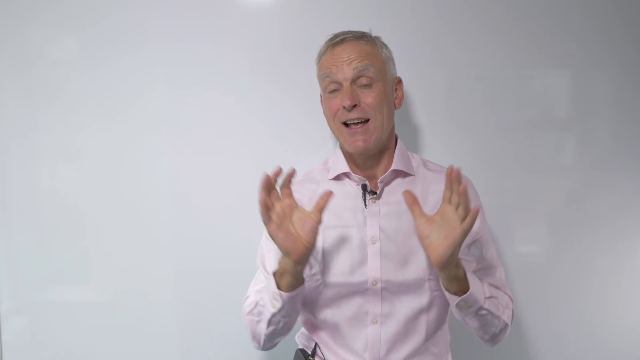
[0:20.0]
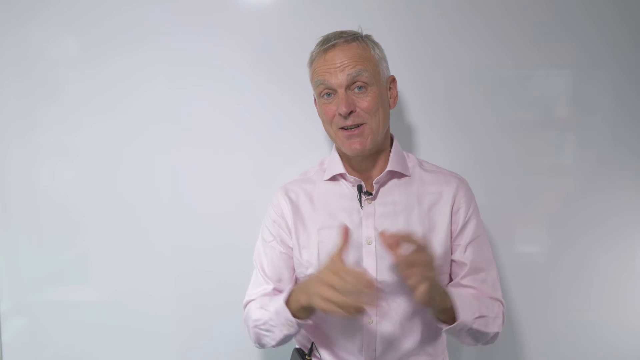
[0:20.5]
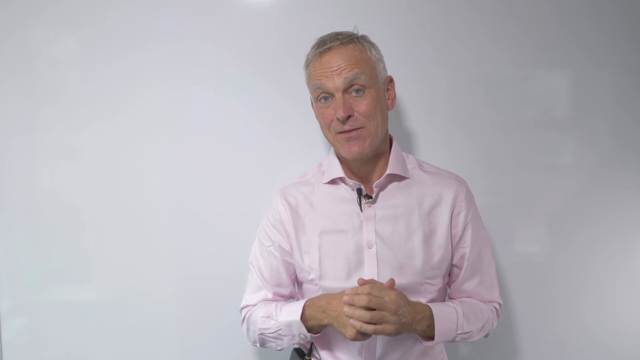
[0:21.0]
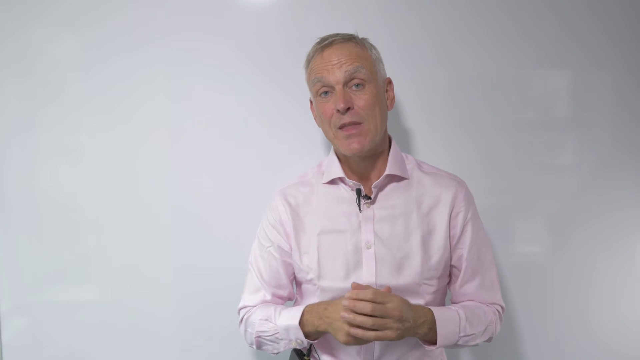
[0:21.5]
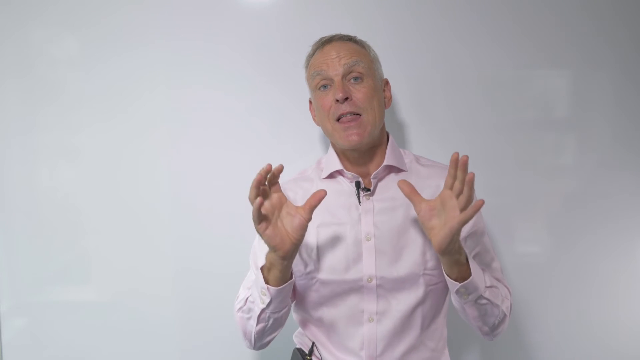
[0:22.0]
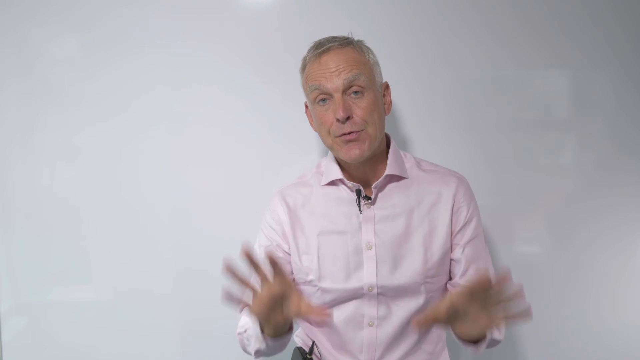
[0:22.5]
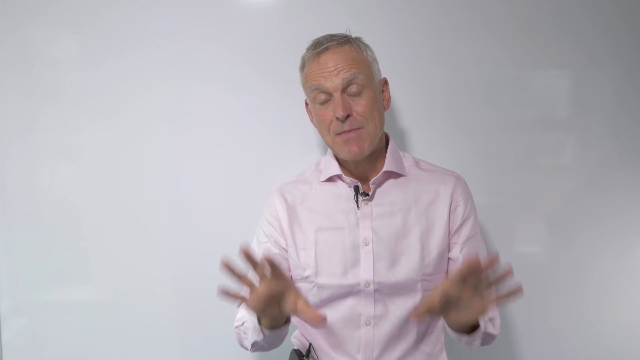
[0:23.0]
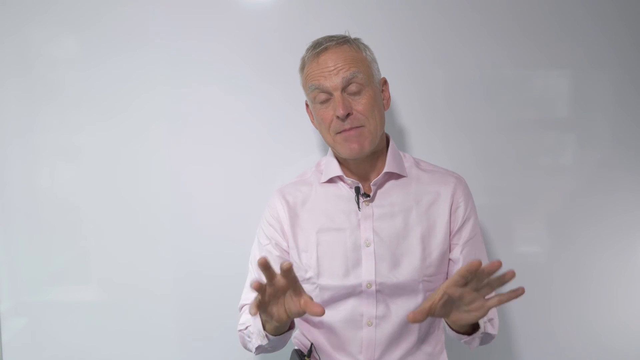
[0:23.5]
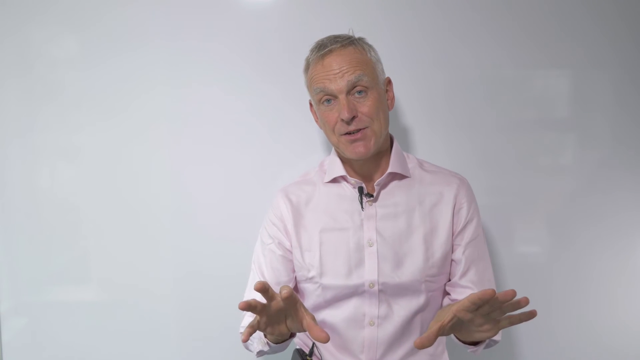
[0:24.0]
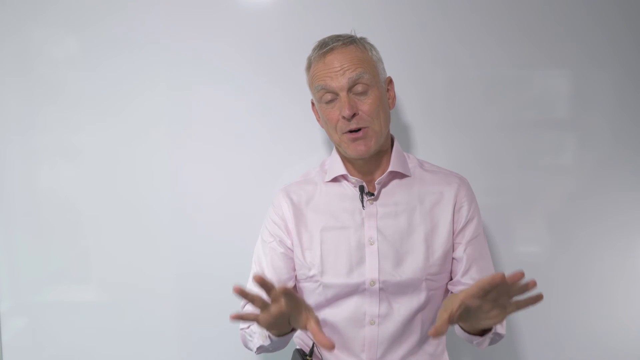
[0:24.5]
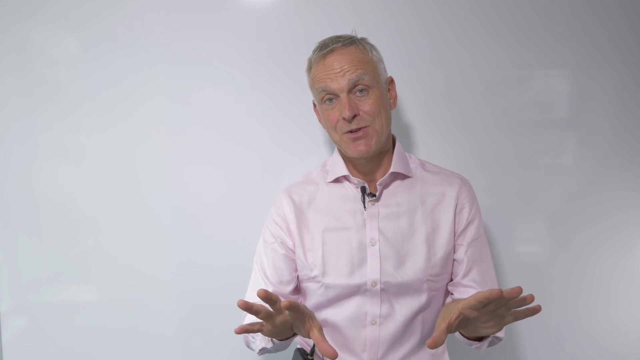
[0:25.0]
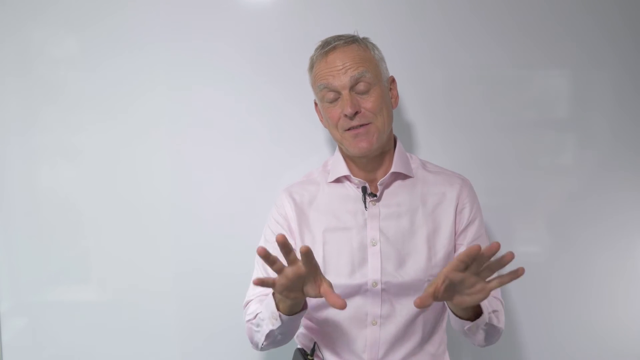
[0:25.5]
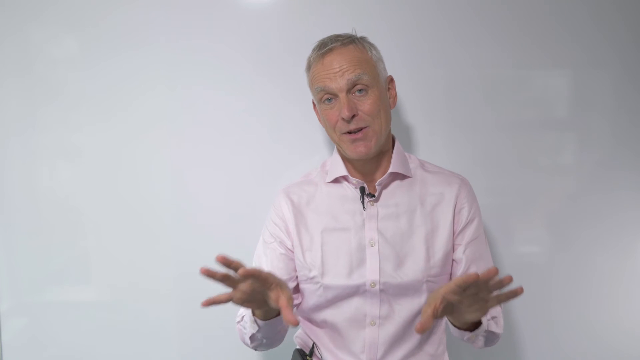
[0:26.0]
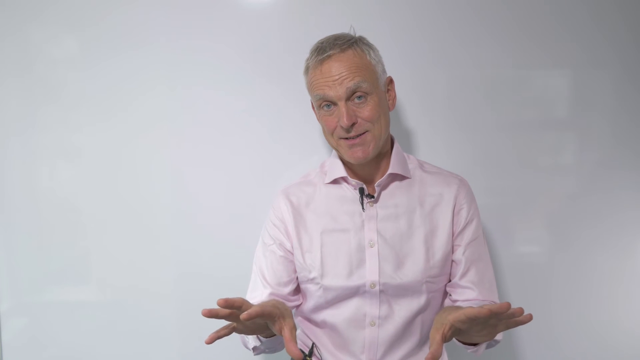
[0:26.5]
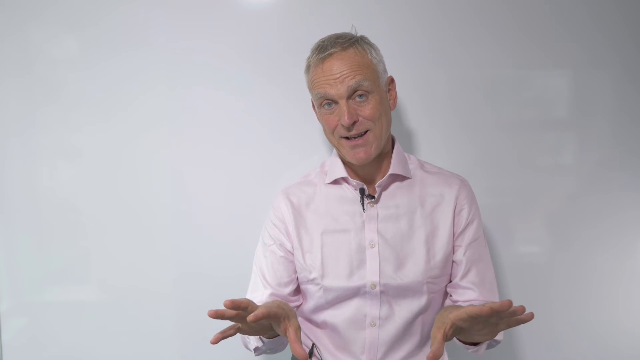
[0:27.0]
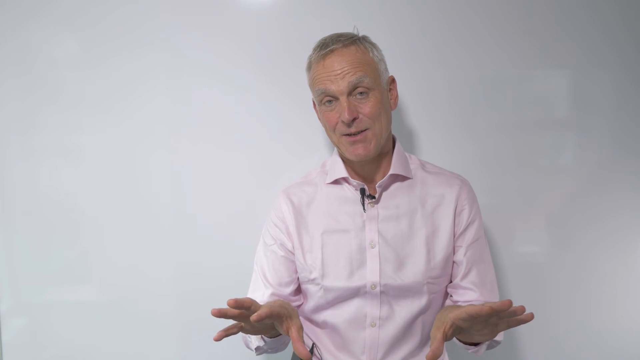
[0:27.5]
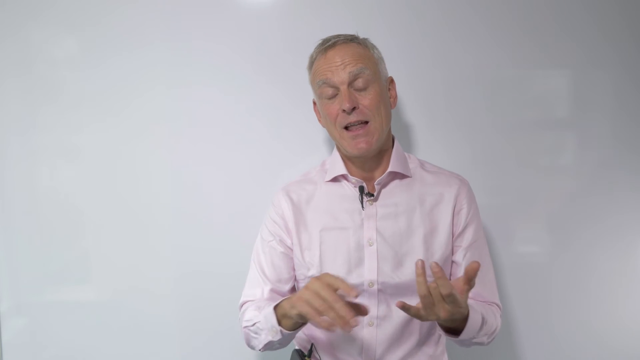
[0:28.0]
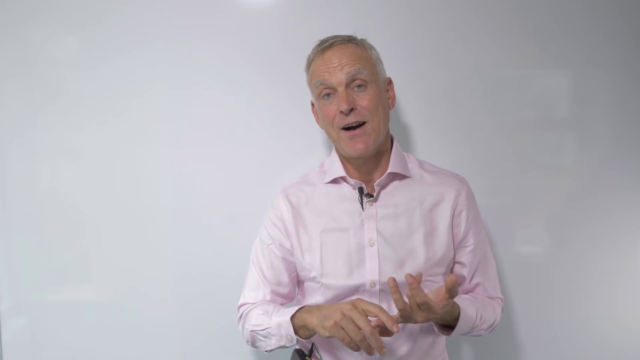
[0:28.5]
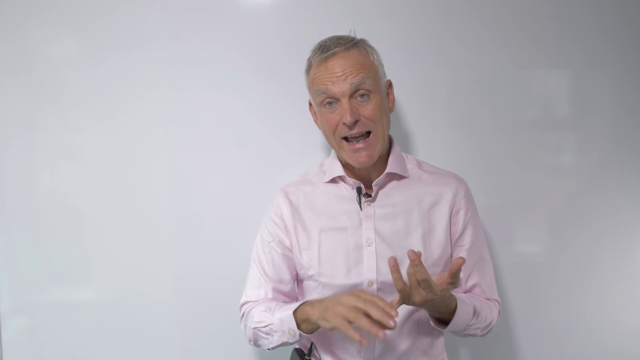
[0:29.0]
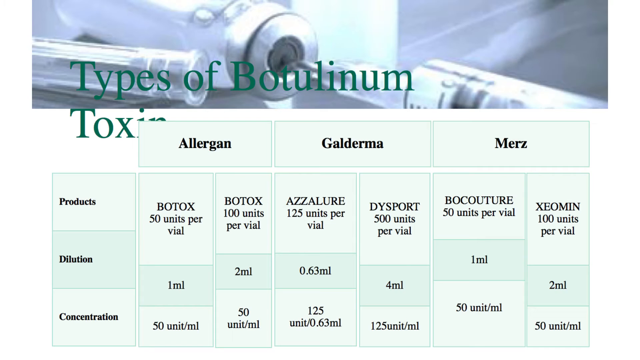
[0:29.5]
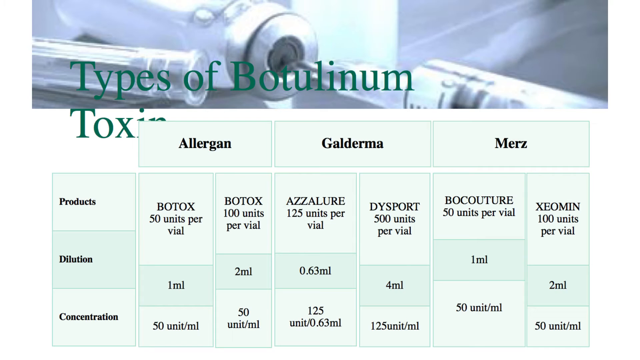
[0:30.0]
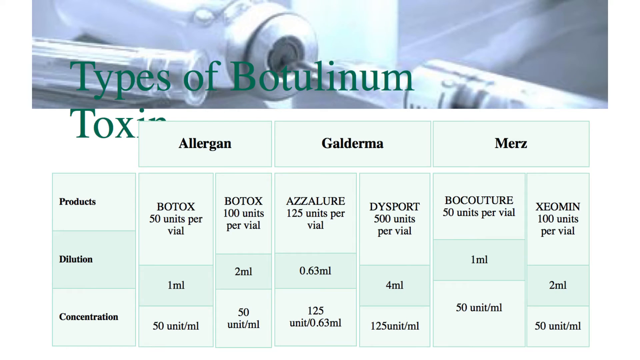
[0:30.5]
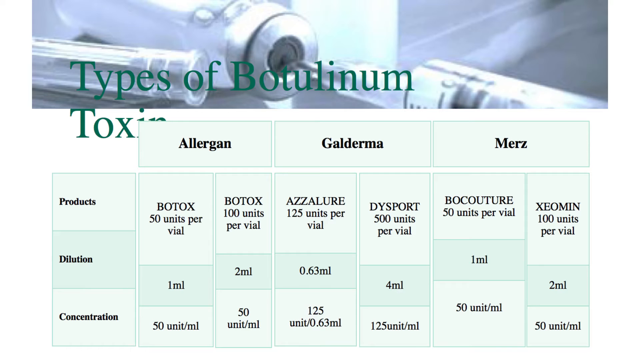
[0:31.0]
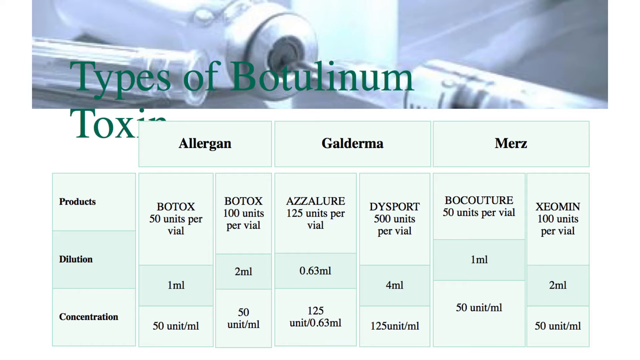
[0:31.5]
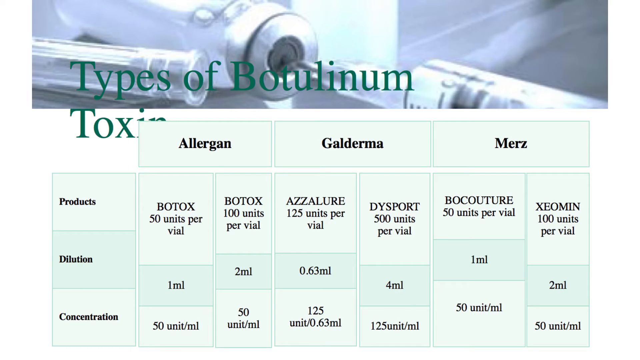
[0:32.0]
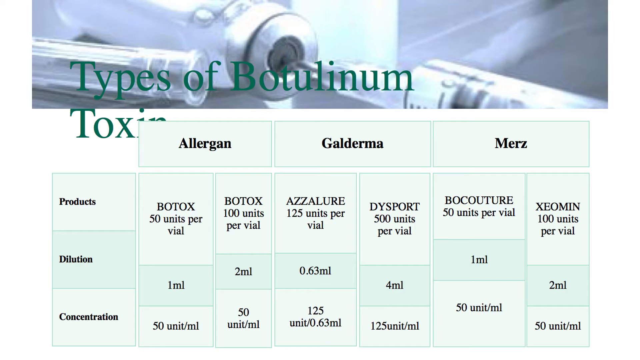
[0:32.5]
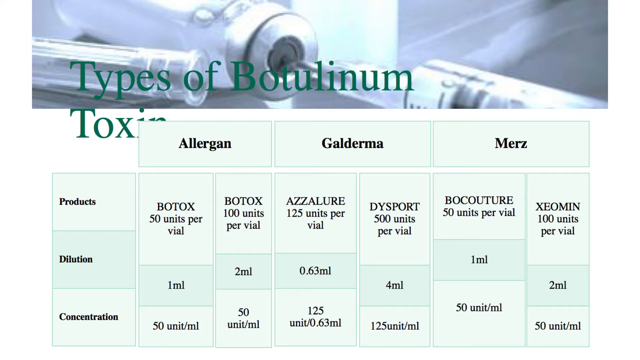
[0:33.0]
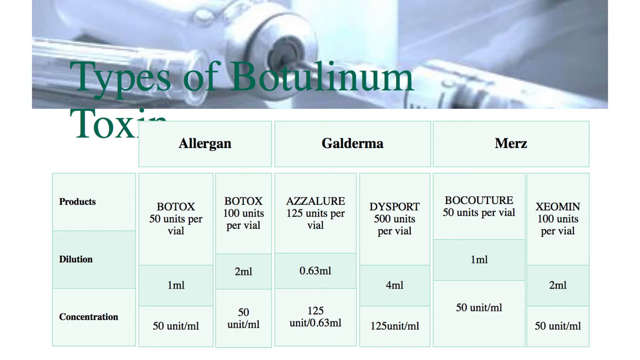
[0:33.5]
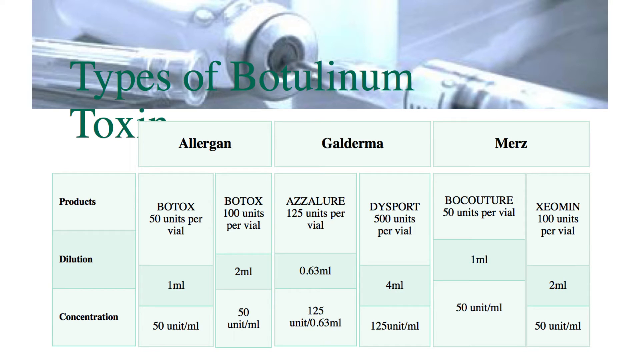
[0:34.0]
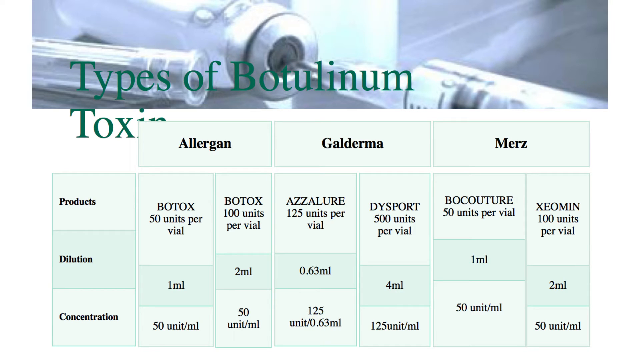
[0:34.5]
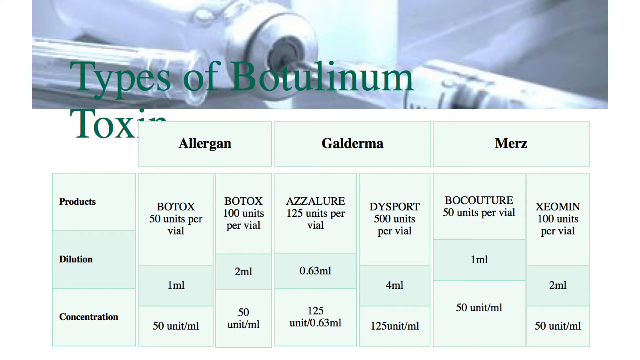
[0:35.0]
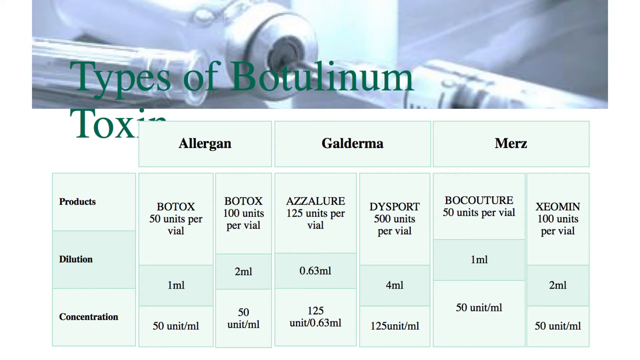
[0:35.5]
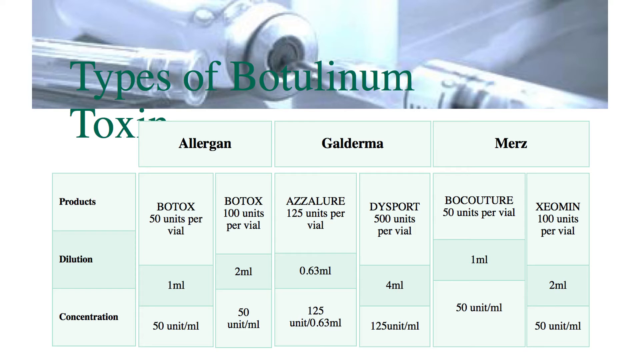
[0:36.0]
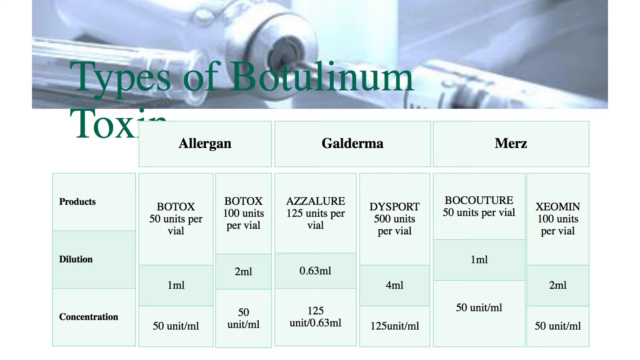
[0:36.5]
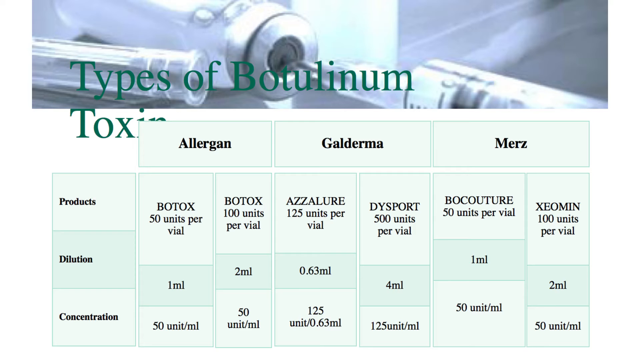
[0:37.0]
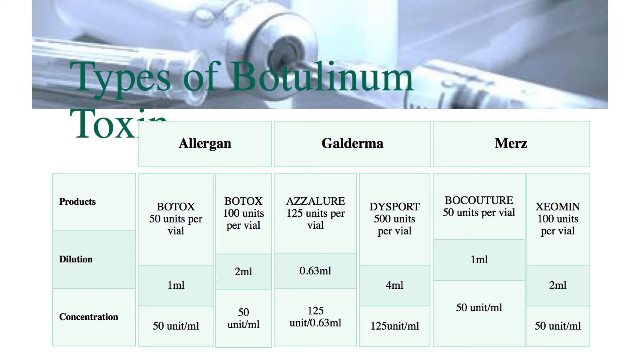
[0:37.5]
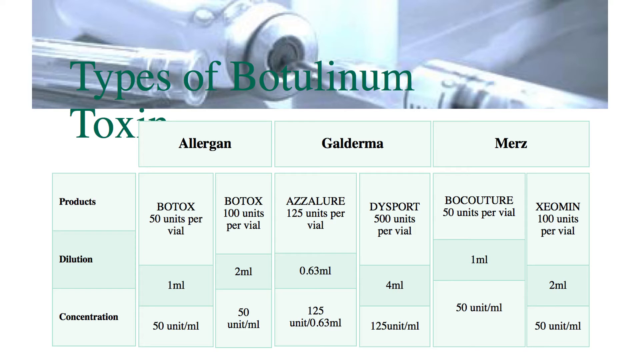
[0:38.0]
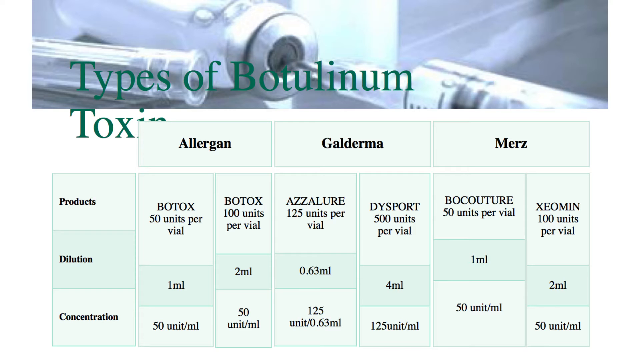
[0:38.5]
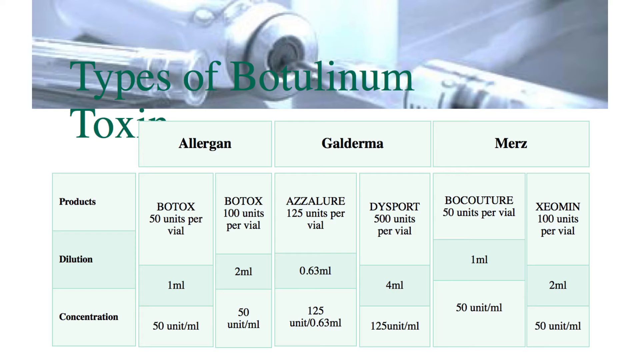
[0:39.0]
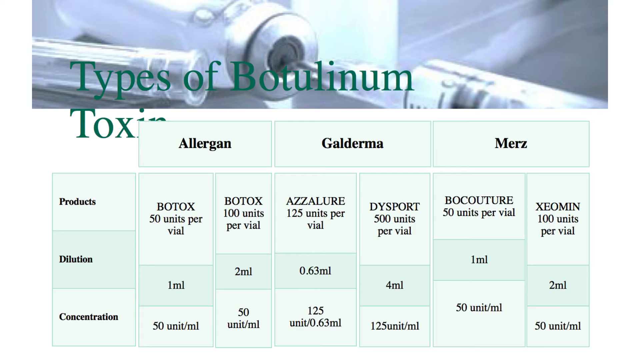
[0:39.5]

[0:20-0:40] An older white man in a light pink button-up shirt stands in front of a white wall, seen from the waist up. His gray hair is a little whiter on the sides and somewhat darker on top. He speaks and uses his hands for emphasis, holding them out in front of him with his fingers straight and palms facing down, then starts counting on his fingers. The screen then changes to a chart with "types of botulism toxin" at the top. A small header image shows what looks like a small clear jar of the kind Botox comes in, with a syringe going into the top of the bottle. In the chart underneath, three headings run across the top: Allergan, Galderma and Merz. On the left side are three labels: Products, Dilution and Concentration. The cells contain various measurements given in milliliters.